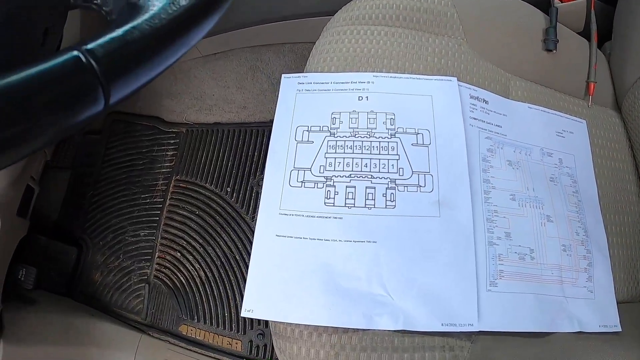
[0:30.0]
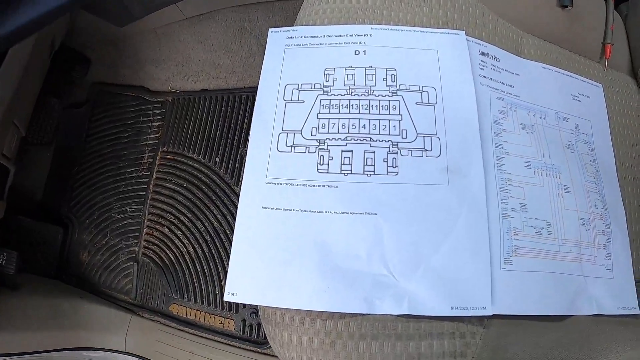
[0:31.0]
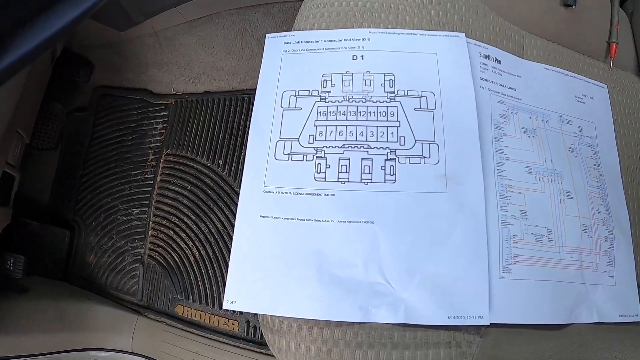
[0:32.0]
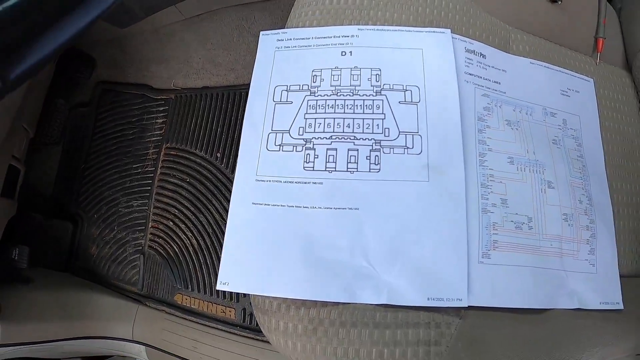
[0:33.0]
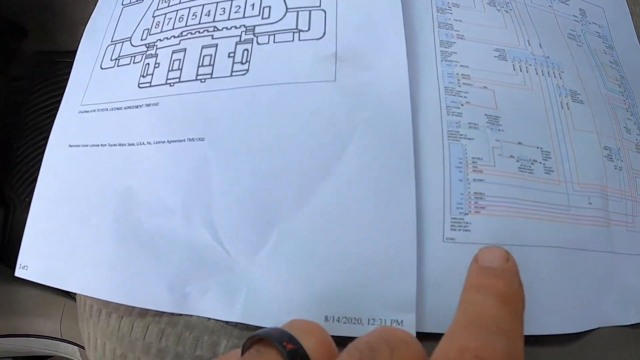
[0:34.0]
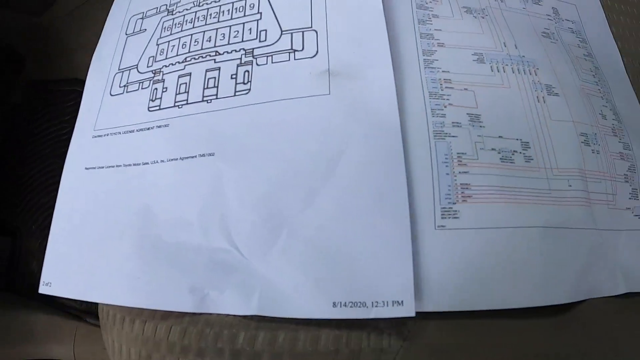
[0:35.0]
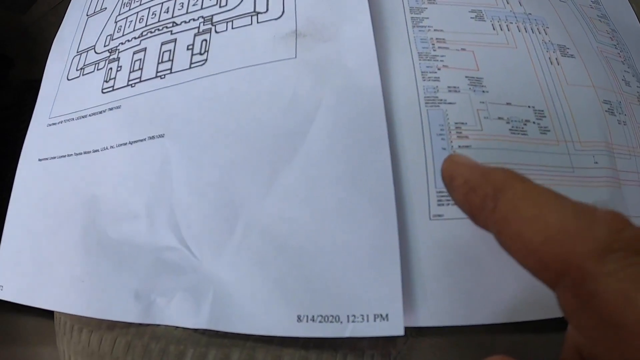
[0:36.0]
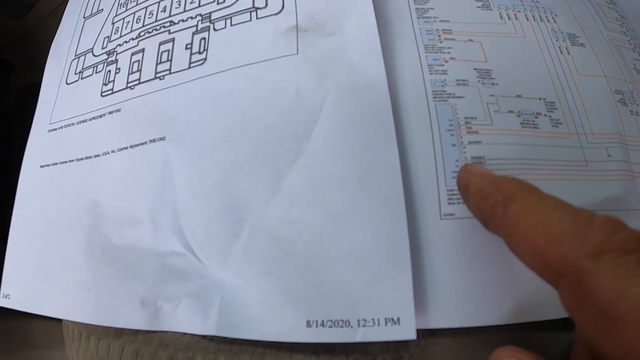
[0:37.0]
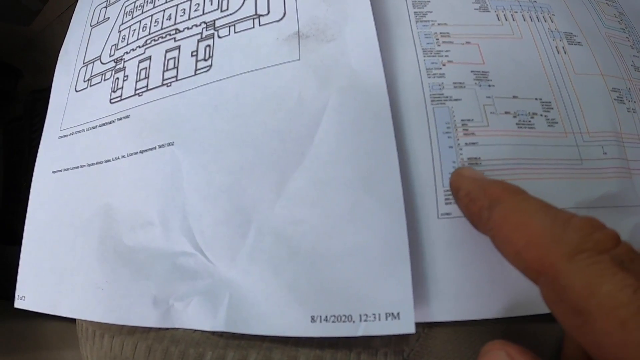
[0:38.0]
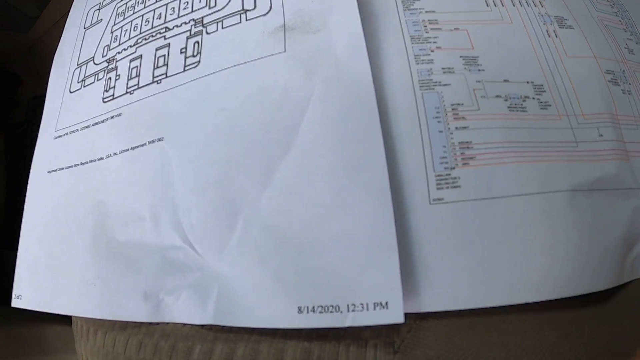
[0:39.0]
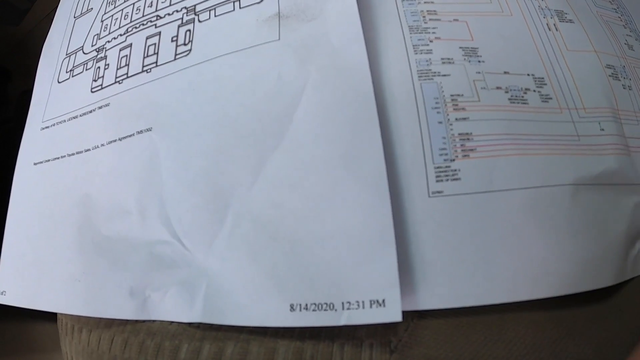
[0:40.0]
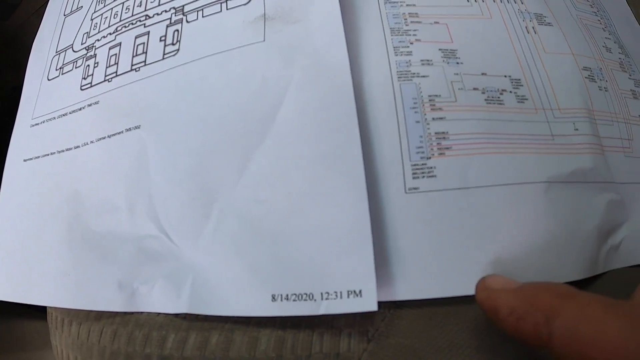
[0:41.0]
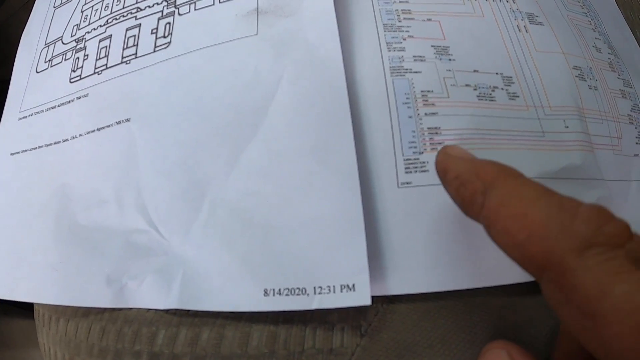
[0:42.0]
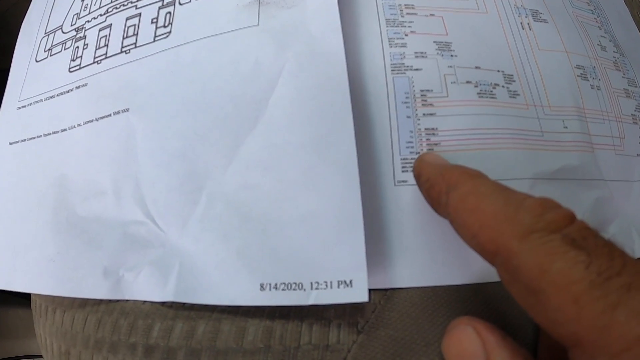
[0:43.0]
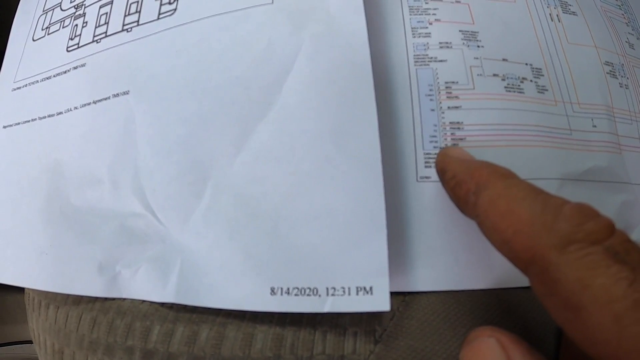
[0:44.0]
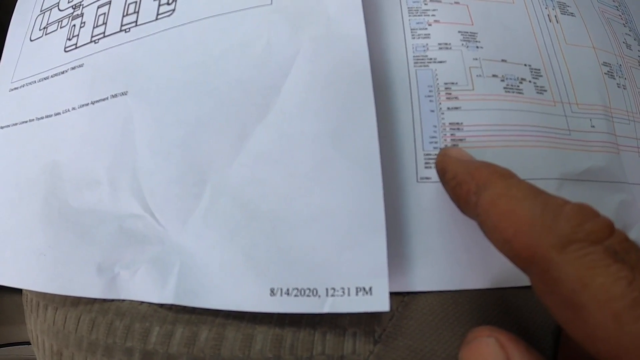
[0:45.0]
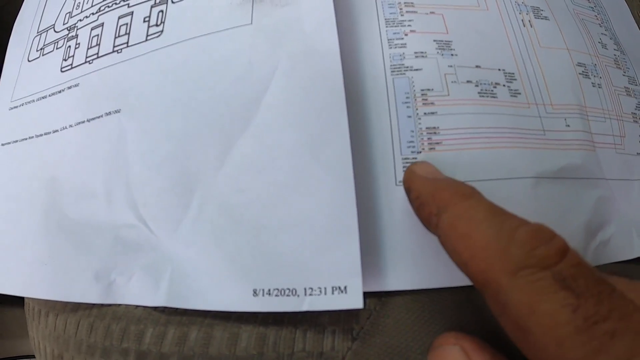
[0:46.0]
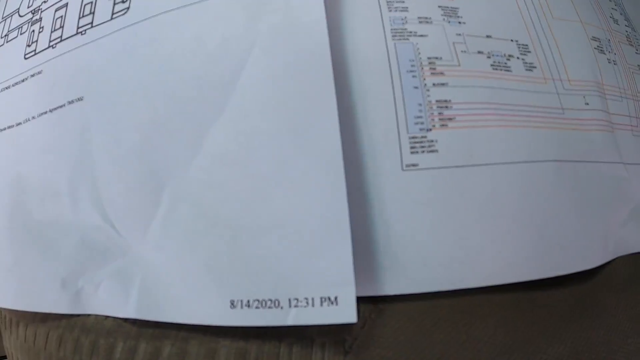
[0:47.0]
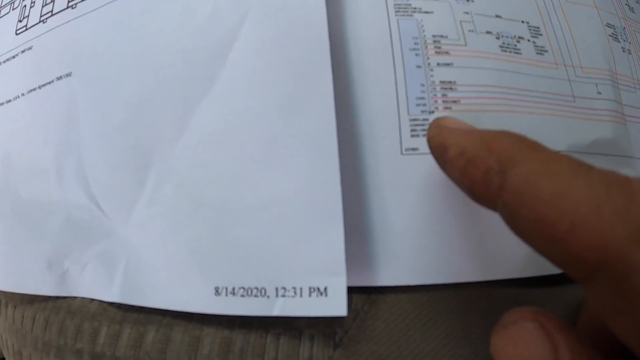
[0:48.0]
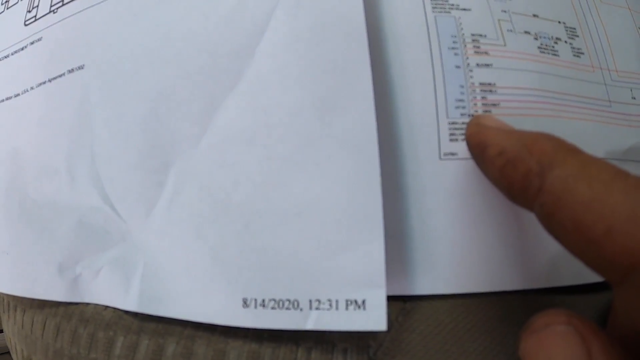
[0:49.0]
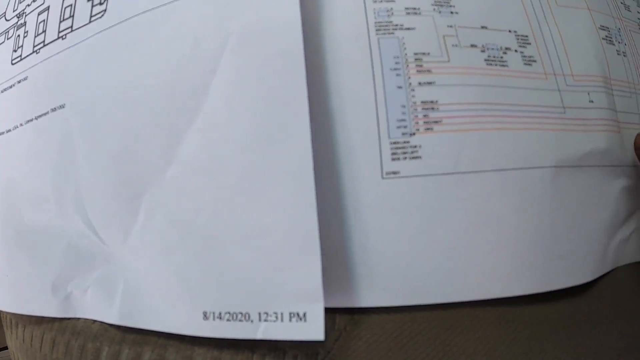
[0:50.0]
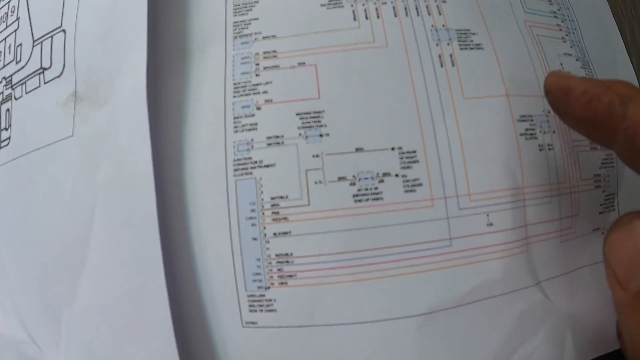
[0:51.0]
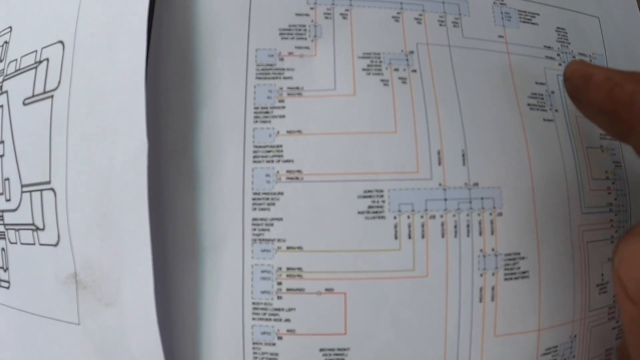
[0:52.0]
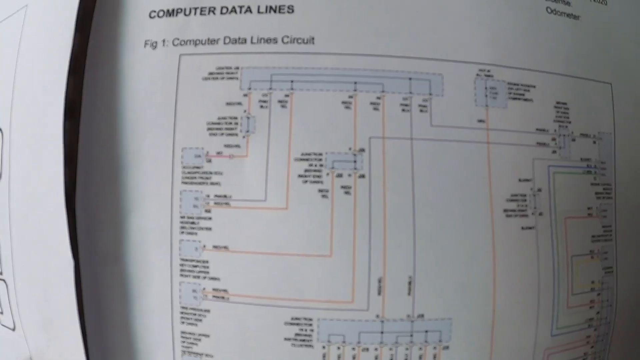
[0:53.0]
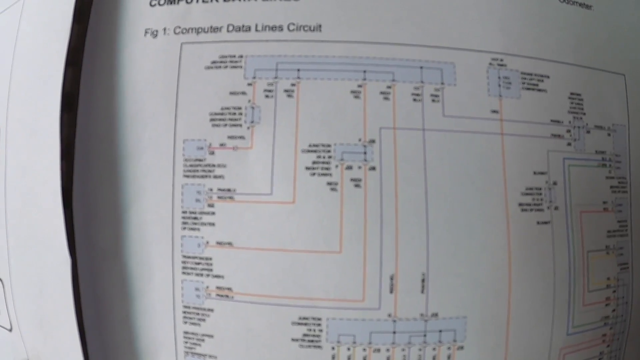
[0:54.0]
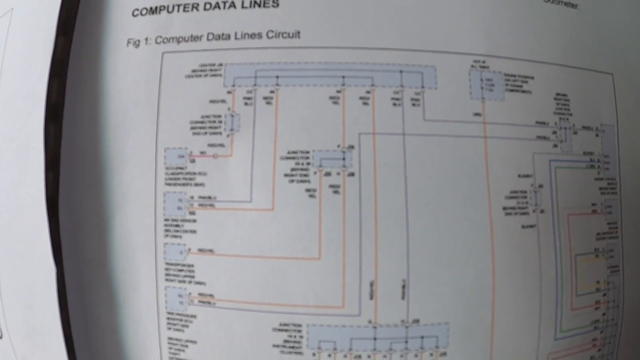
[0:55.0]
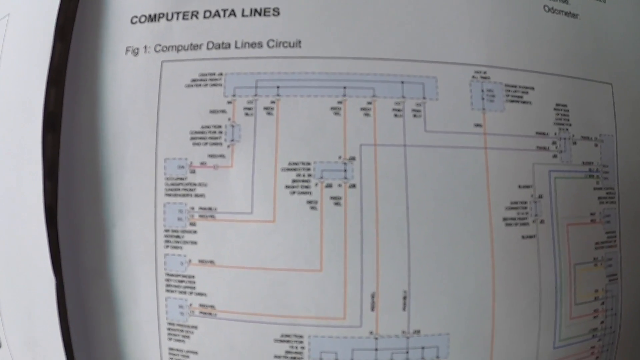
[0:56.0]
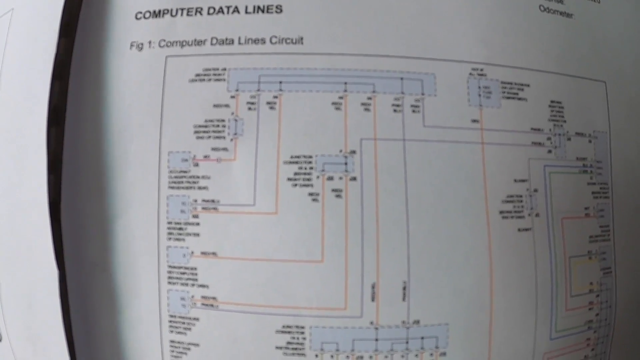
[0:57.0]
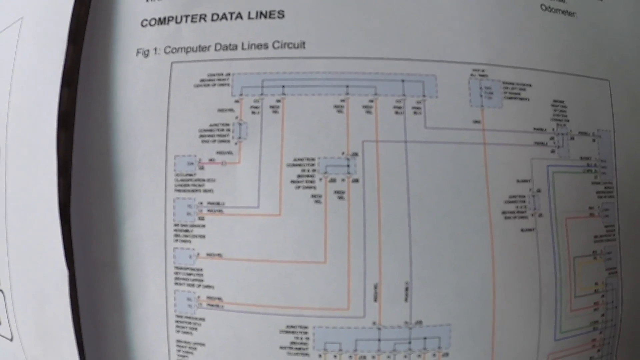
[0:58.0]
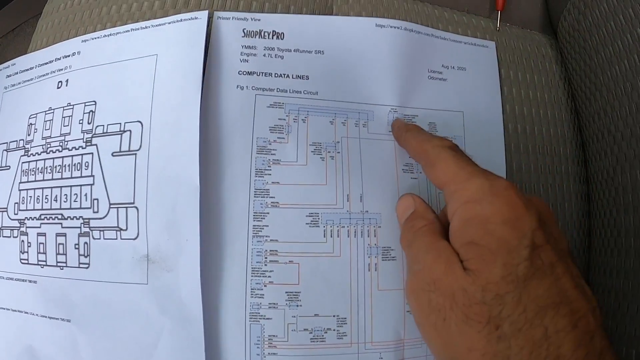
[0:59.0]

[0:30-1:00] The person opens the driver's door and shows something like a blueprint, possibly a diagram showing car parts and their locations by number. One image on the left side is labeled "D1". Using the pointer finger of the right hand, the person points to the right side of an image. The pages are printouts, with a date at the bottom reading "8/14/2020" and "12 31 p.m." The fingernail side of the person's pointer finger is dirty, suggesting this may be the mechanic. He points to several spots on the image next to it, which is labeled "computer data line circuit", and above it in bold capital letters is "COMPUTER DATA LINES".